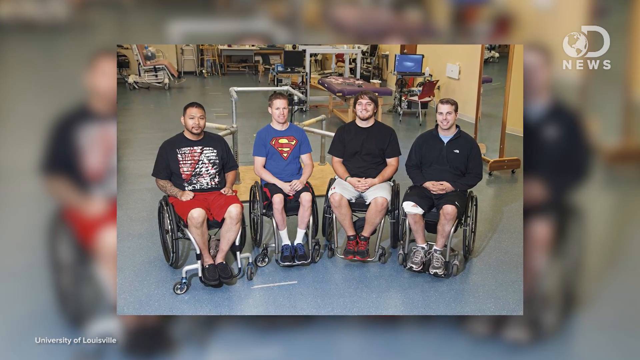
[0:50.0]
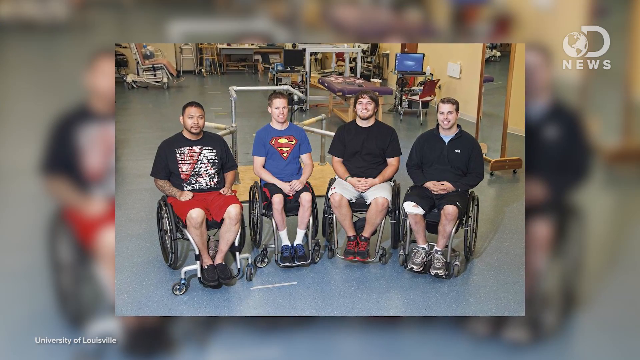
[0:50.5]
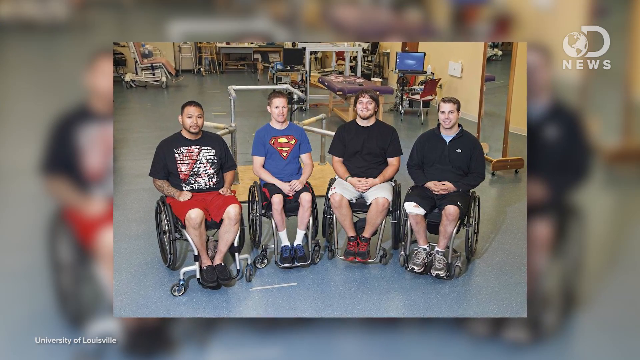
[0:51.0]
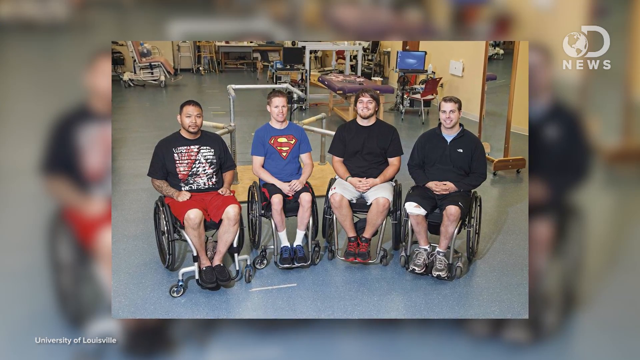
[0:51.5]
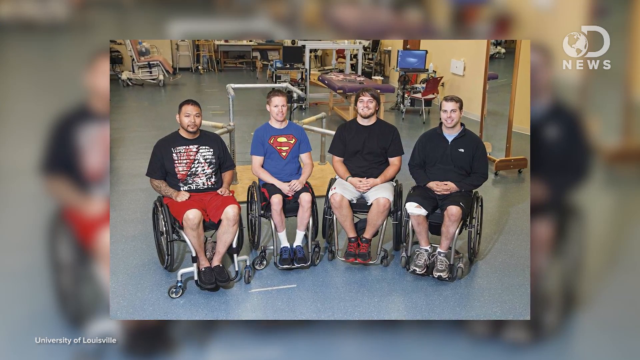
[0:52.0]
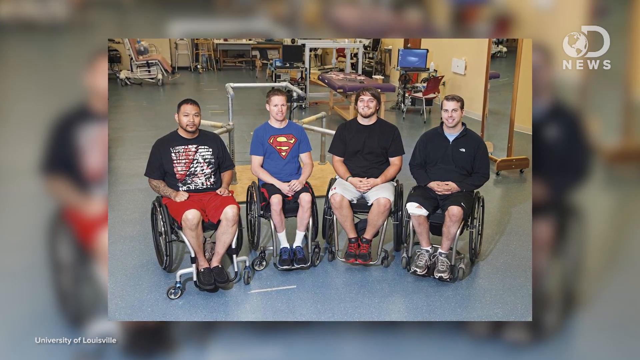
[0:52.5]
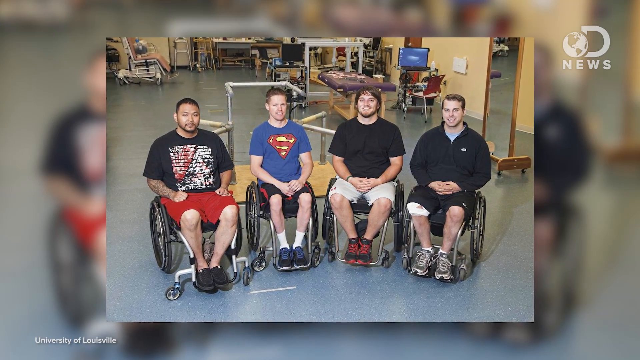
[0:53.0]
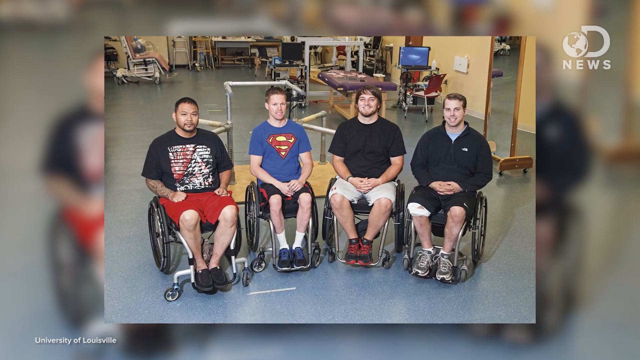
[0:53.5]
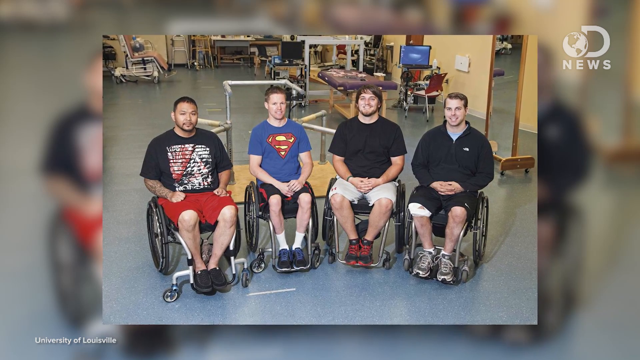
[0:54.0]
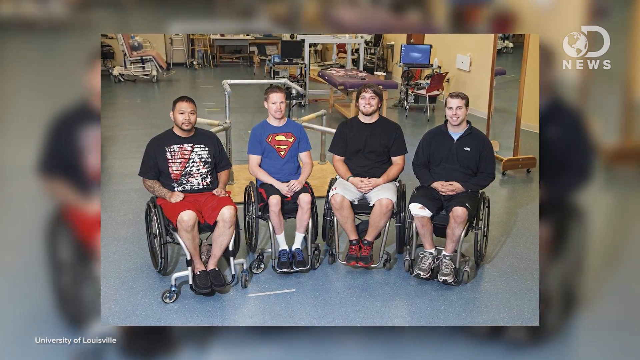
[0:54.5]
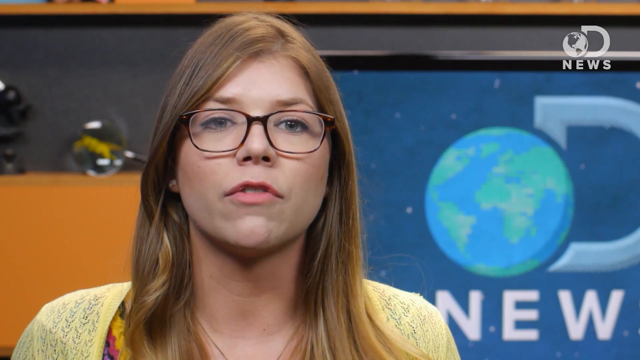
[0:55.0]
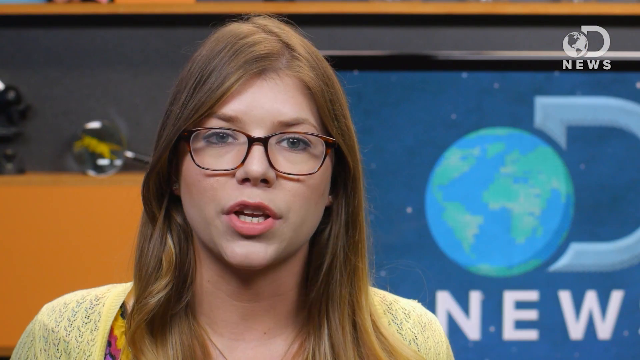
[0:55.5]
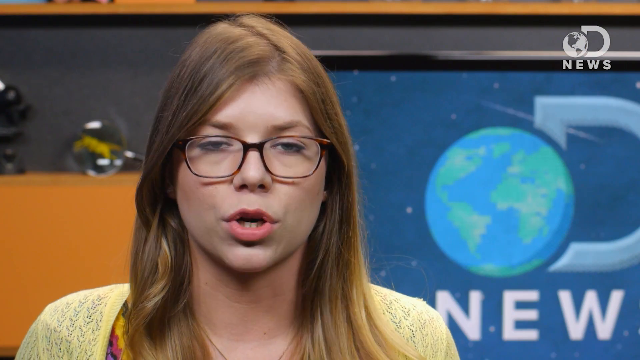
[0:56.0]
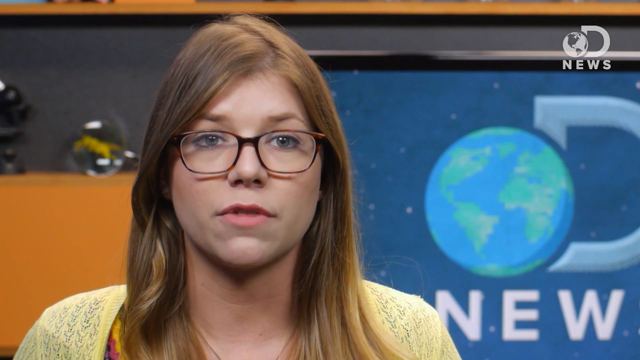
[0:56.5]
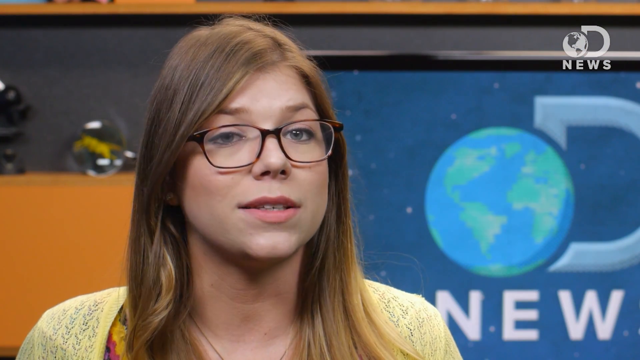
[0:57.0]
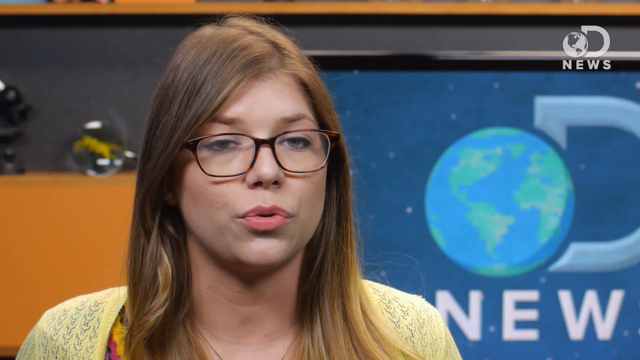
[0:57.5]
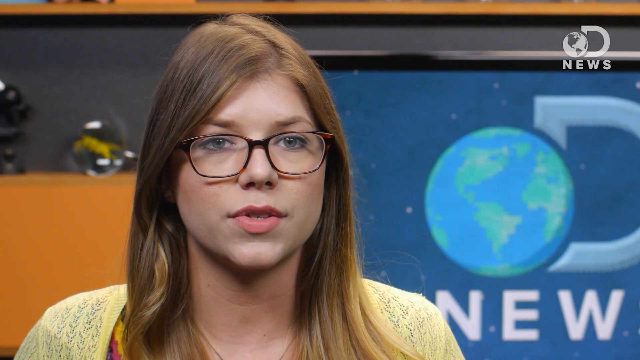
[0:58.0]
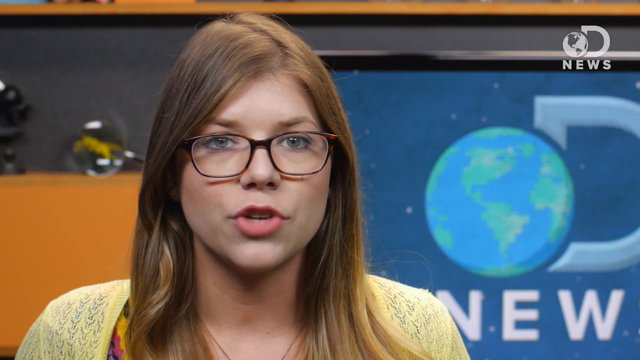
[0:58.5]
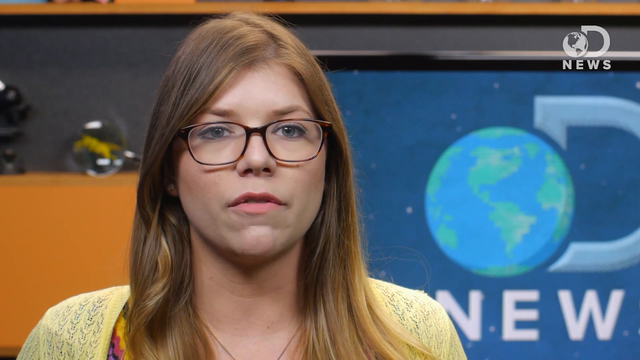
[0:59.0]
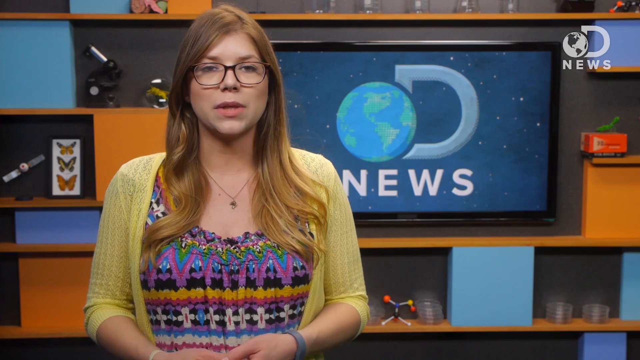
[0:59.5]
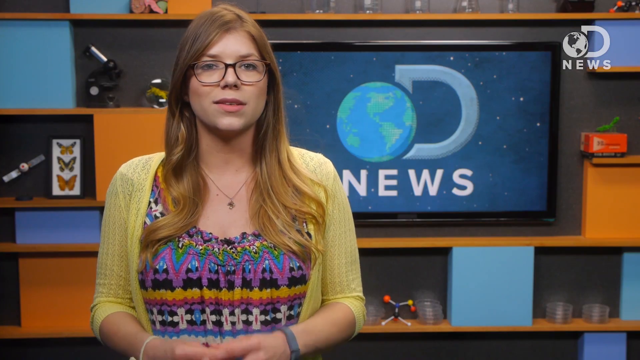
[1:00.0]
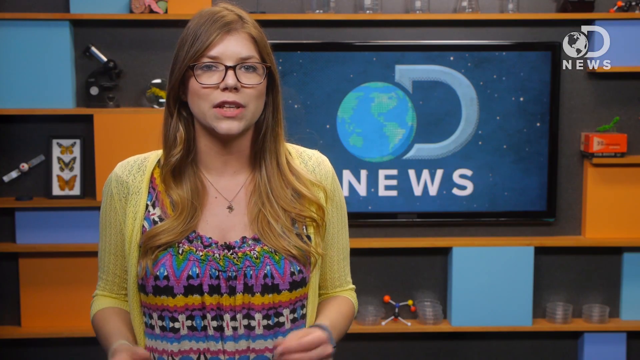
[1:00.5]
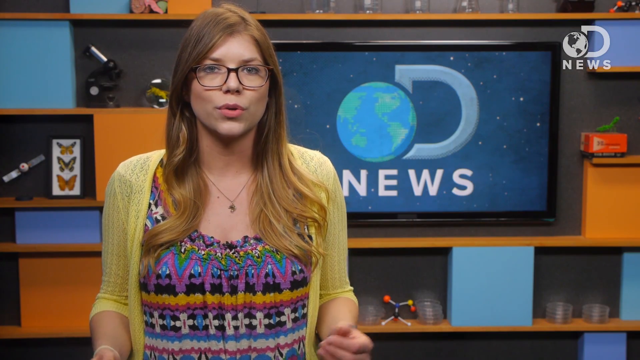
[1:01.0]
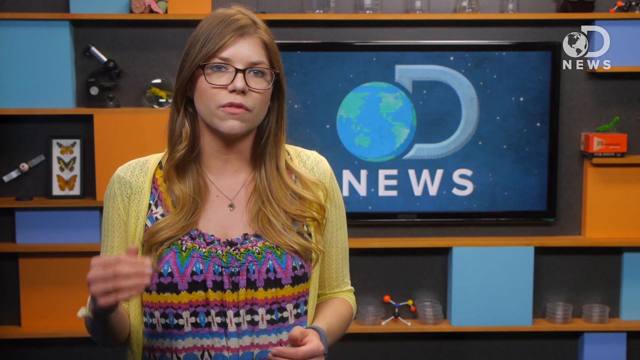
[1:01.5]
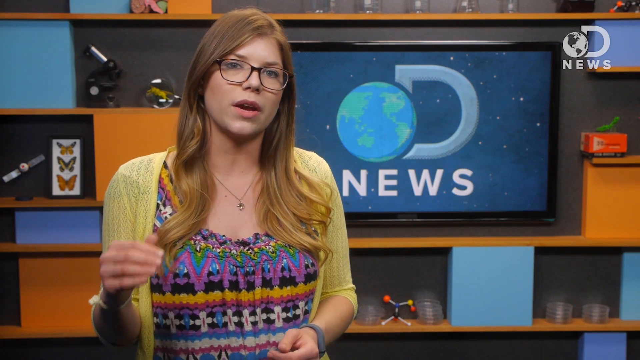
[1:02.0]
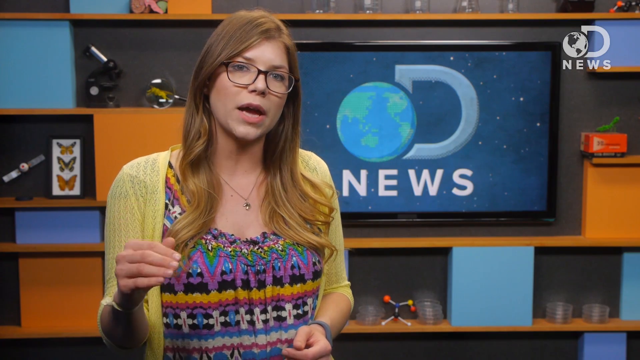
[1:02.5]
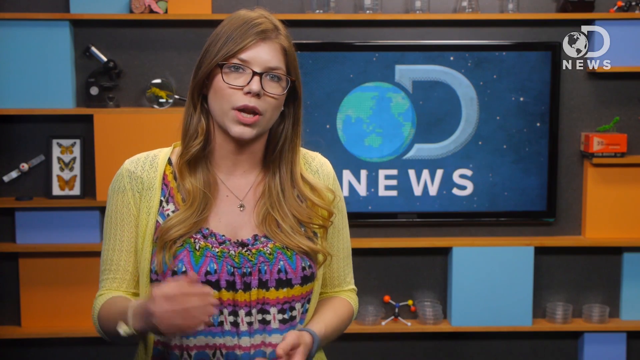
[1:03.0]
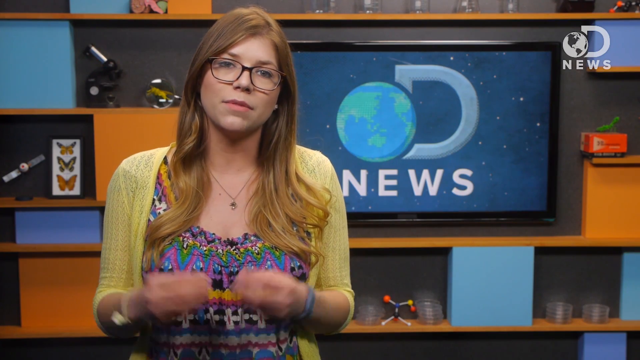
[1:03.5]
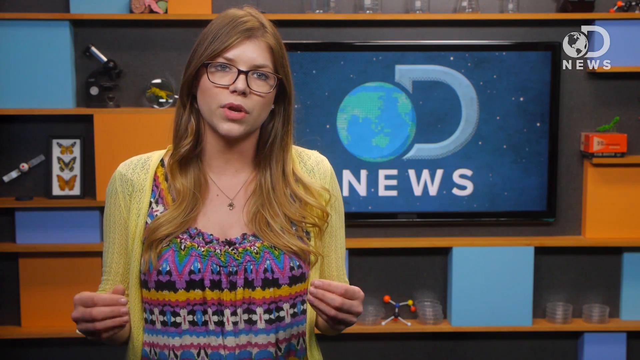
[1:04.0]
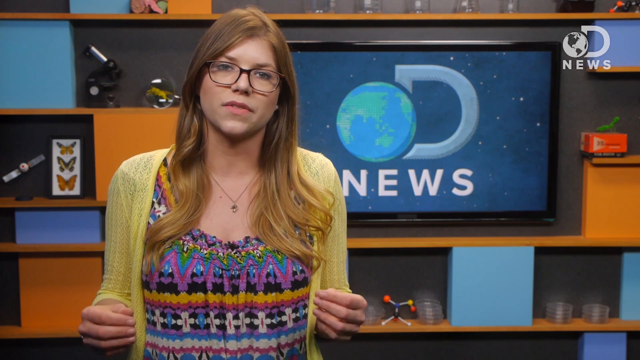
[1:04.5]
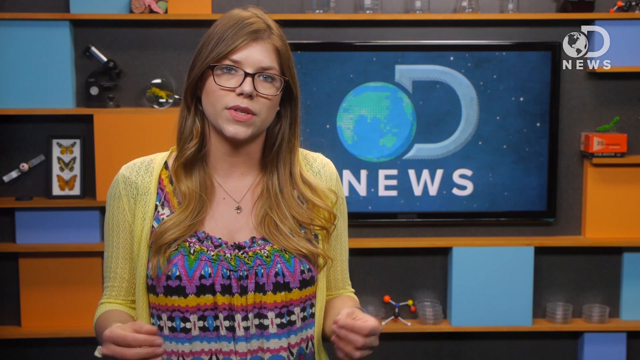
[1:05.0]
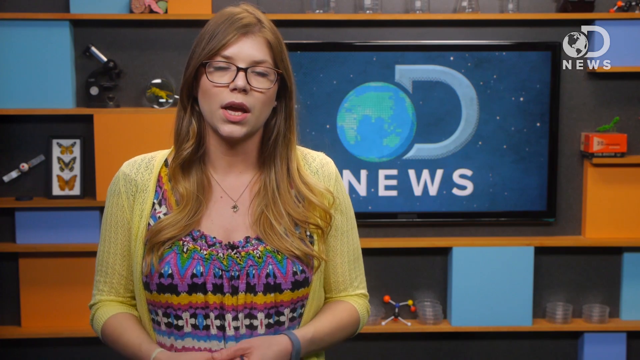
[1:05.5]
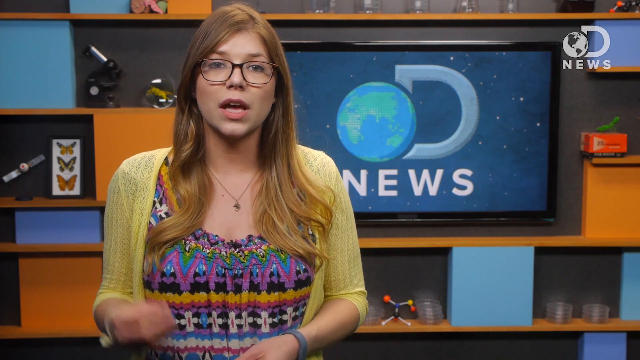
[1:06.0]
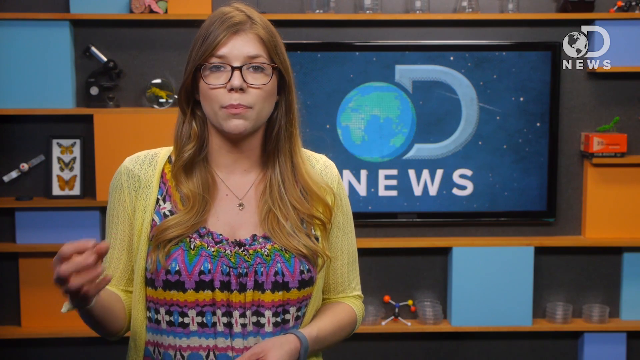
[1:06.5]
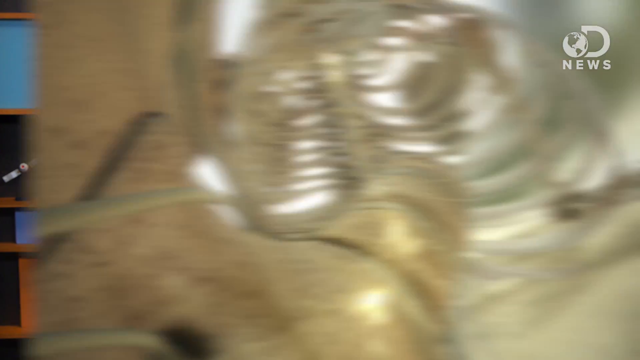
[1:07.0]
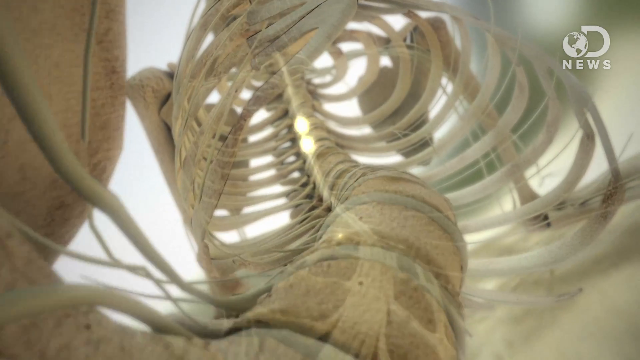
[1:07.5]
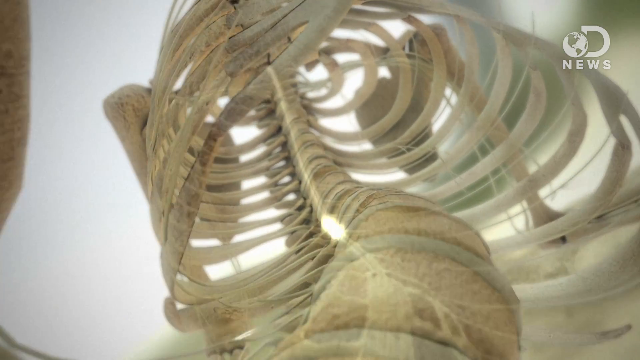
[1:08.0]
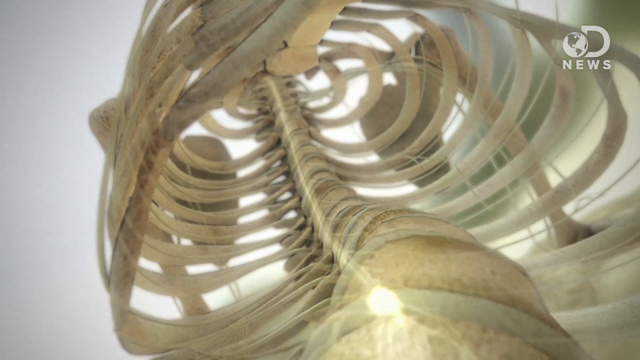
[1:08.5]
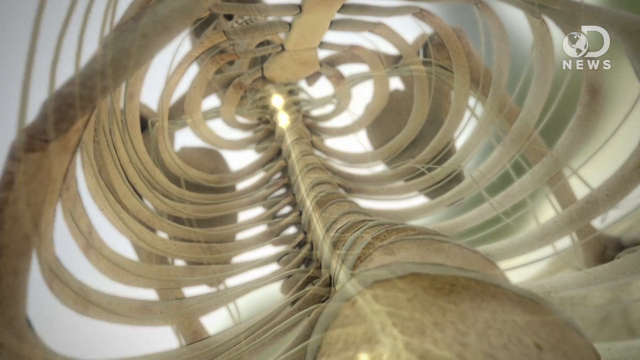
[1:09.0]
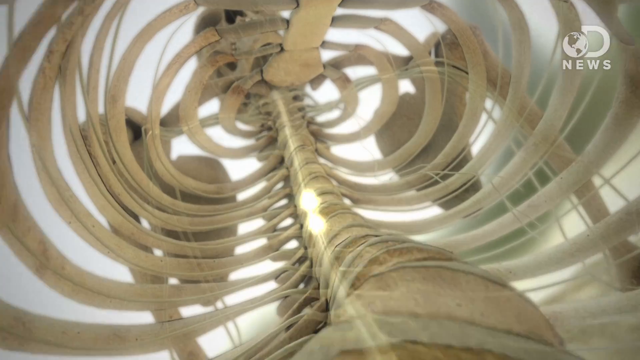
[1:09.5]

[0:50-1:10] A picture shows four men in wheelchairs. From left to right, the first is Asian and the other three are white. The first wears a black and white T-shirt with red shorts; the second wears a Superman shirt with black shorts; the third wears a plain black shirt with white shorts and has a beard; and the fourth wears a black hoodie with black shorts. The background is some sort of gym or occupational therapy facility. The camera zooms in on the image for several seconds before the image slides off screen to the left. The video cuts to the reporter in the Discovery News studio, filmed from the shoulders up, speaking directly into the camera. After a moment the camera pulls back to a waist-up shot. She holds her hands in front of her, separates them slightly, makes a pinching gesture with her thumbs and fingers, and shakes her hands for emphasis before folding them back together. She then lifts her right hand, fingers folded slightly in front of her and thumb folded inward, and raises and lowers it several times in front of her to emphasize her point. She repeats the two-handed pinching gesture, folds her hands in front of her, and raises her right hand in a claw-like gesture to about chest height. The video then transitions to a digitally rendered image of a light running up a skeleton's spine.